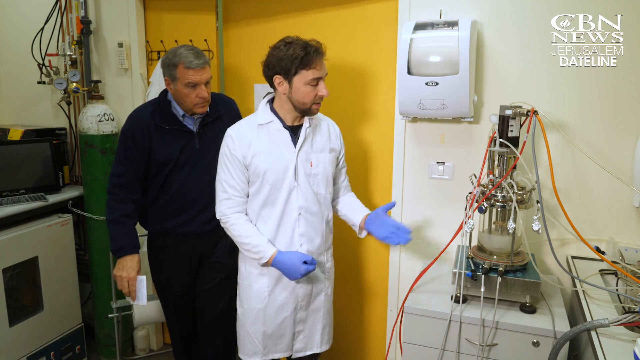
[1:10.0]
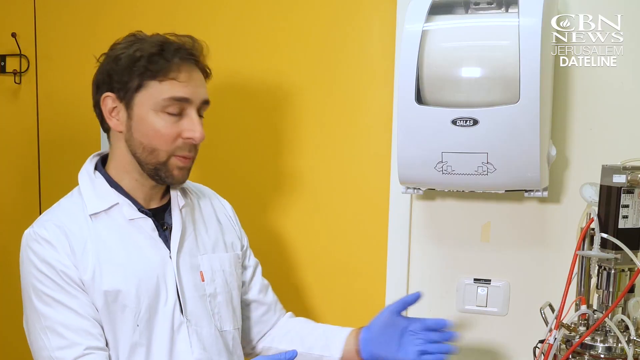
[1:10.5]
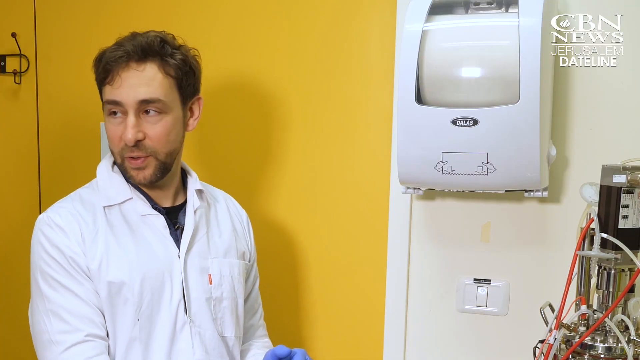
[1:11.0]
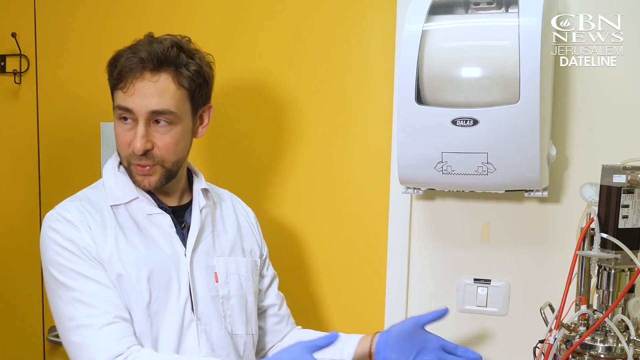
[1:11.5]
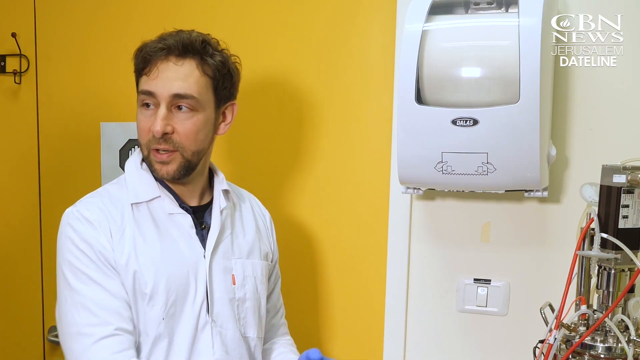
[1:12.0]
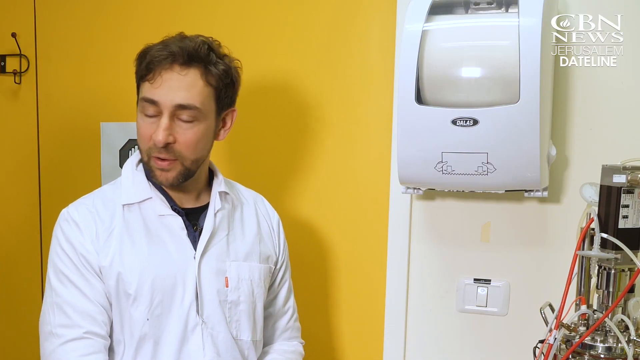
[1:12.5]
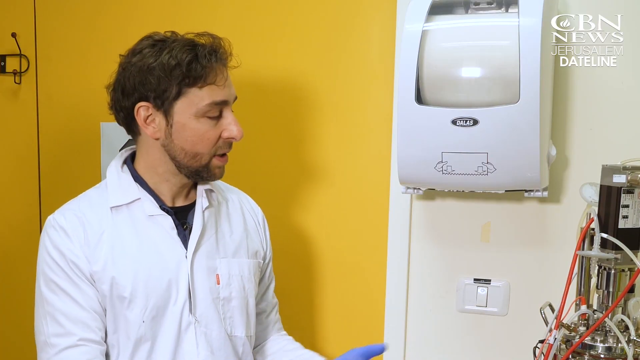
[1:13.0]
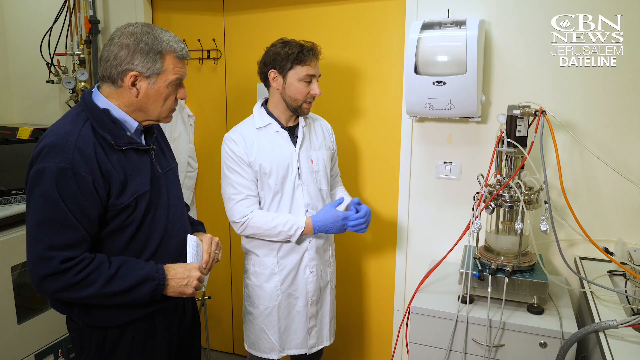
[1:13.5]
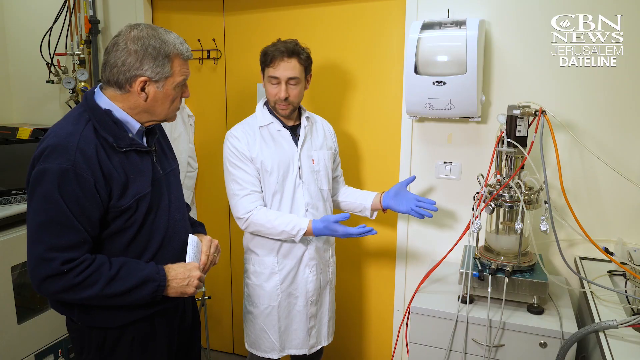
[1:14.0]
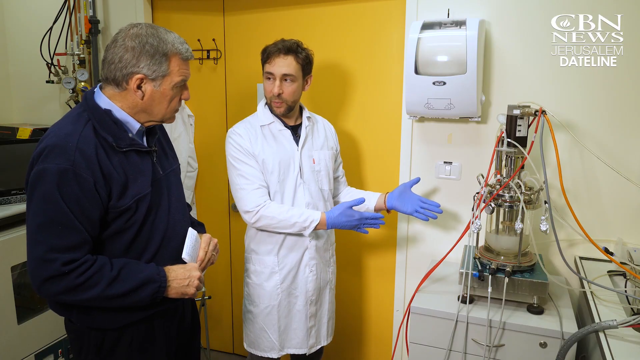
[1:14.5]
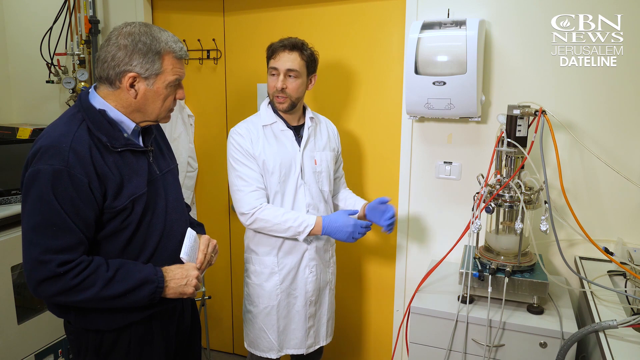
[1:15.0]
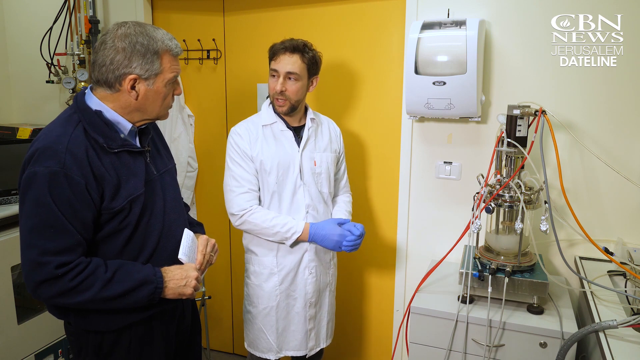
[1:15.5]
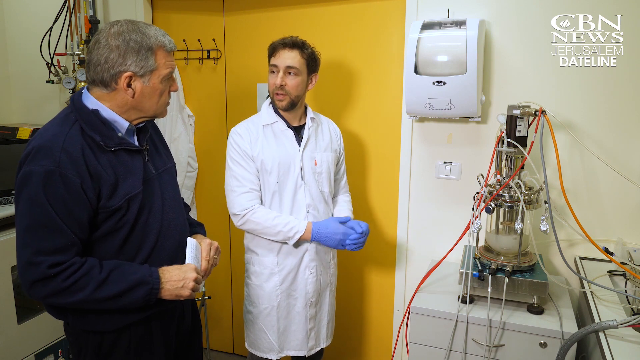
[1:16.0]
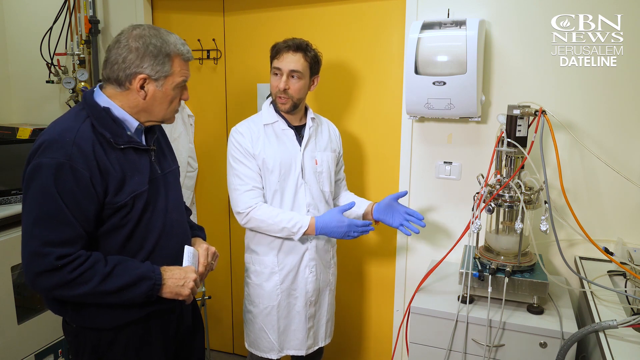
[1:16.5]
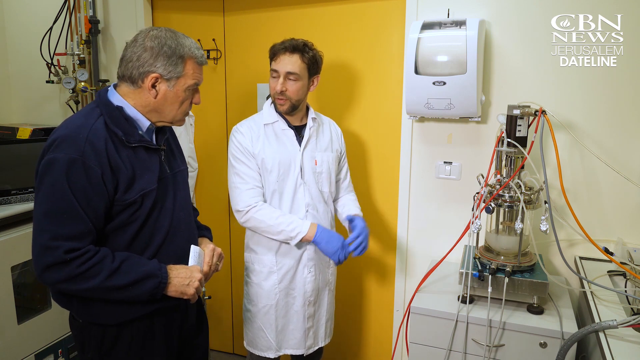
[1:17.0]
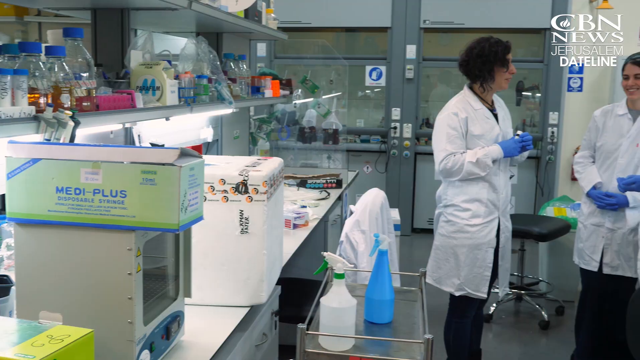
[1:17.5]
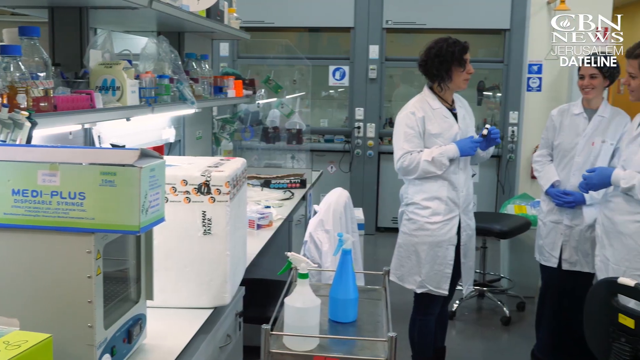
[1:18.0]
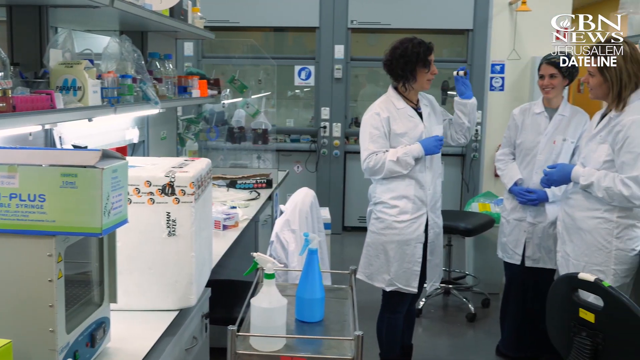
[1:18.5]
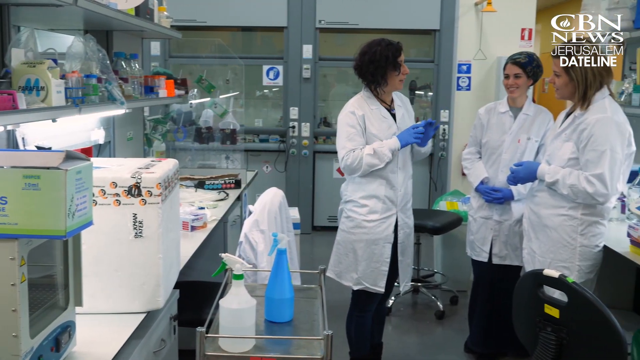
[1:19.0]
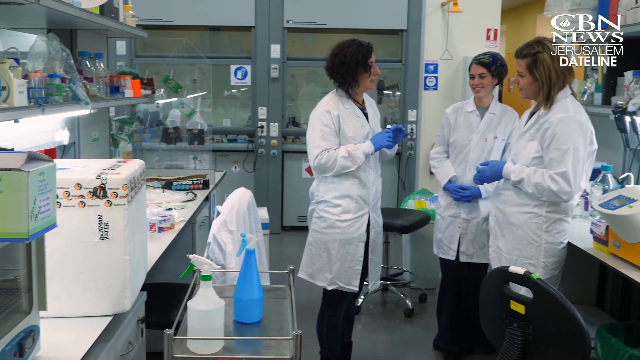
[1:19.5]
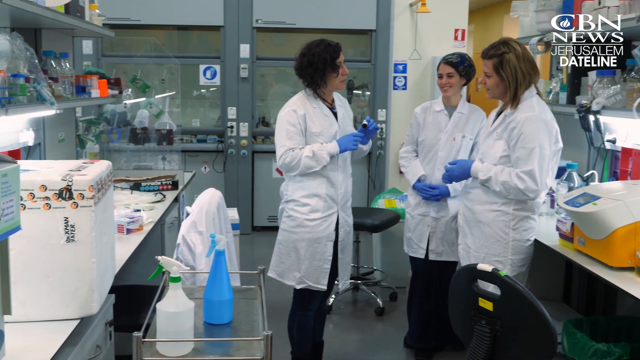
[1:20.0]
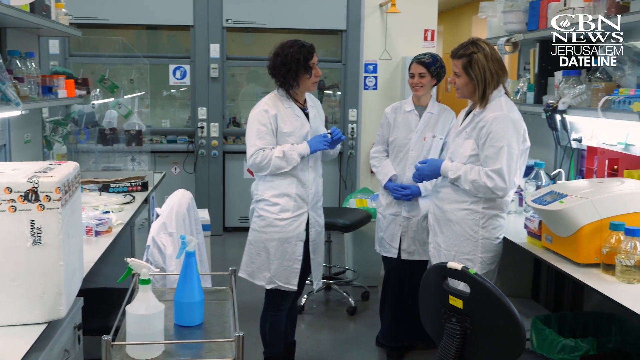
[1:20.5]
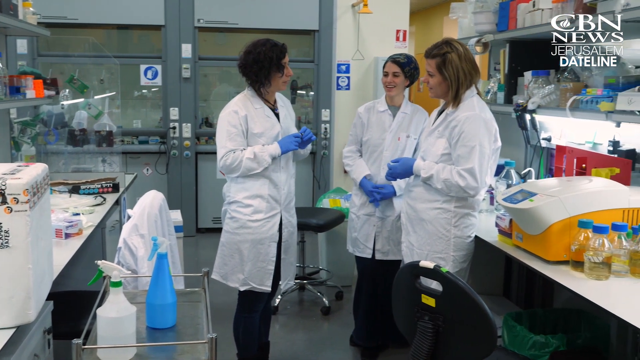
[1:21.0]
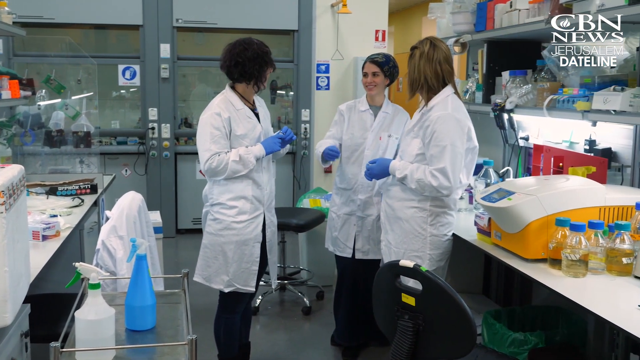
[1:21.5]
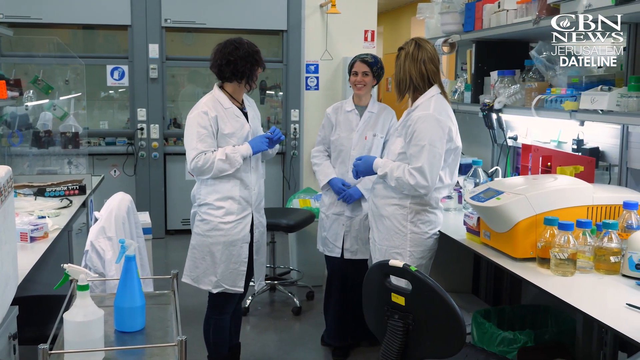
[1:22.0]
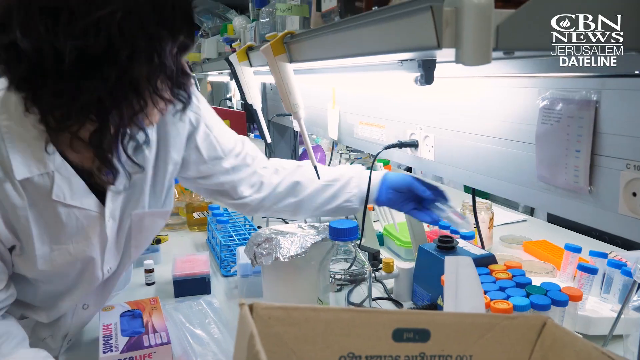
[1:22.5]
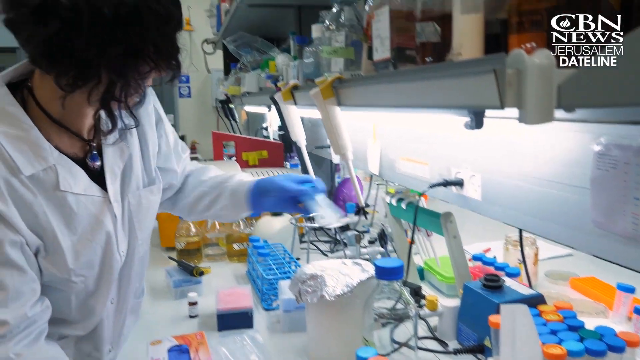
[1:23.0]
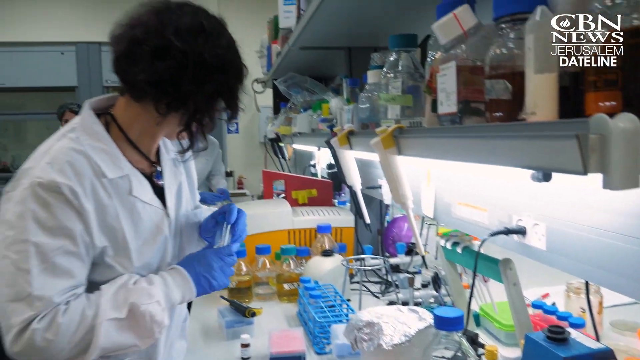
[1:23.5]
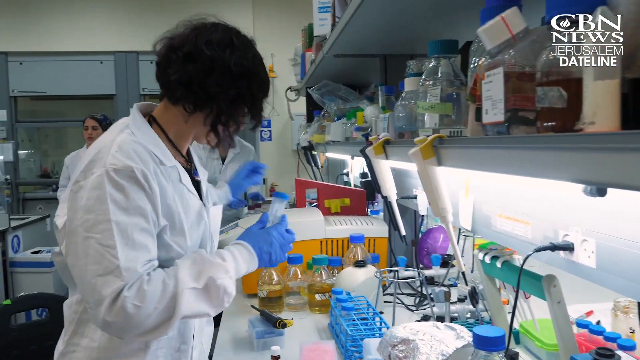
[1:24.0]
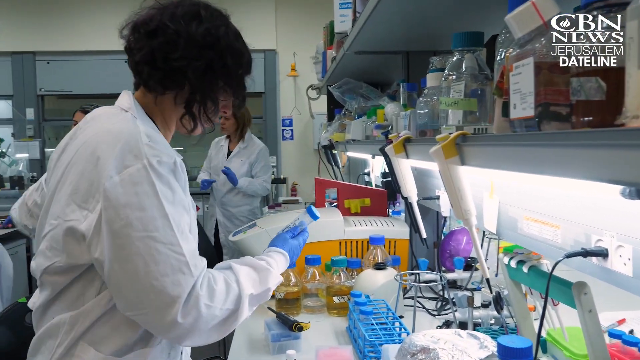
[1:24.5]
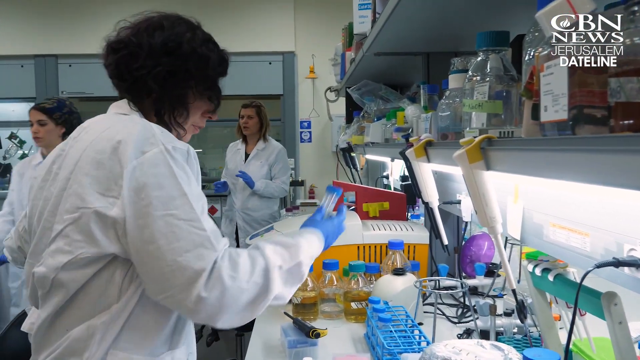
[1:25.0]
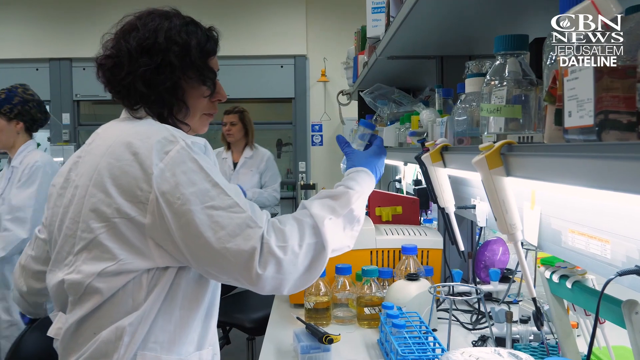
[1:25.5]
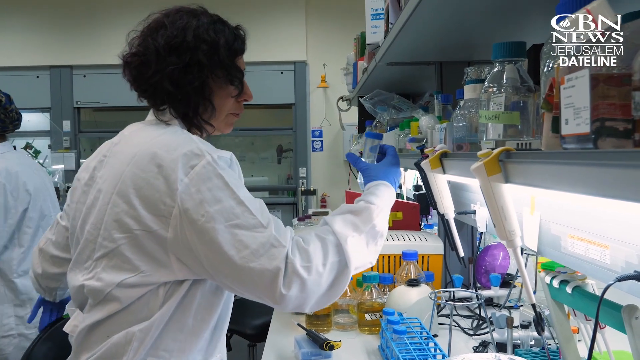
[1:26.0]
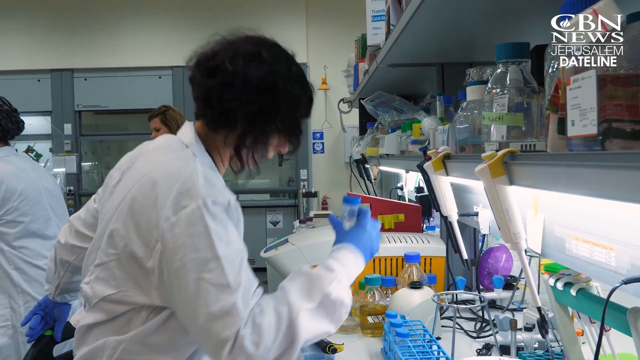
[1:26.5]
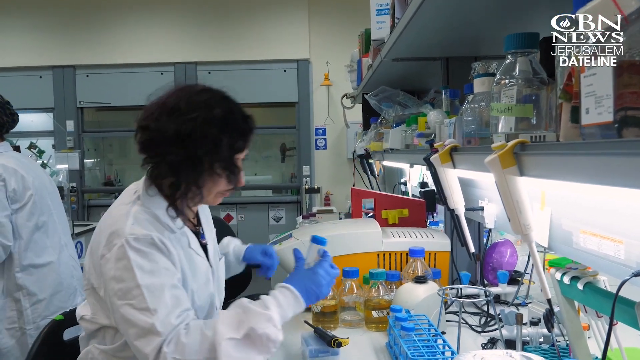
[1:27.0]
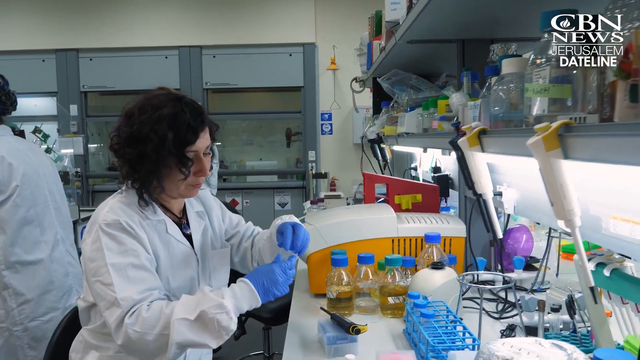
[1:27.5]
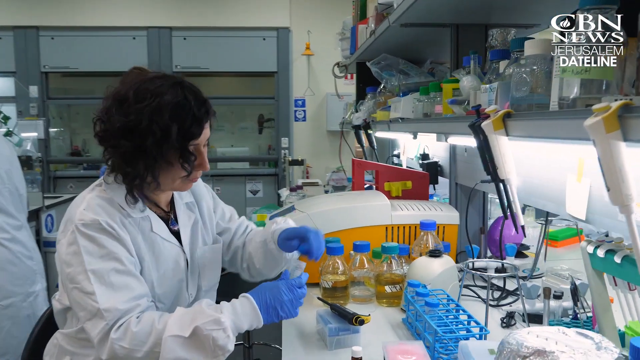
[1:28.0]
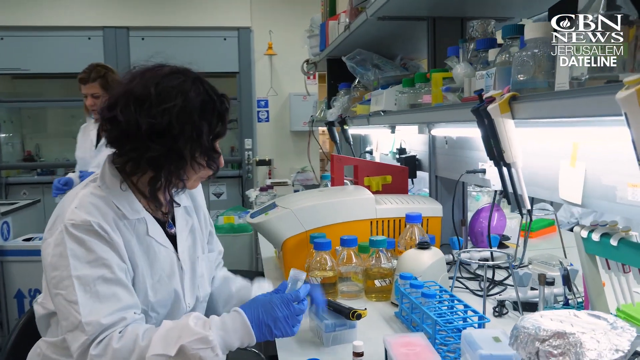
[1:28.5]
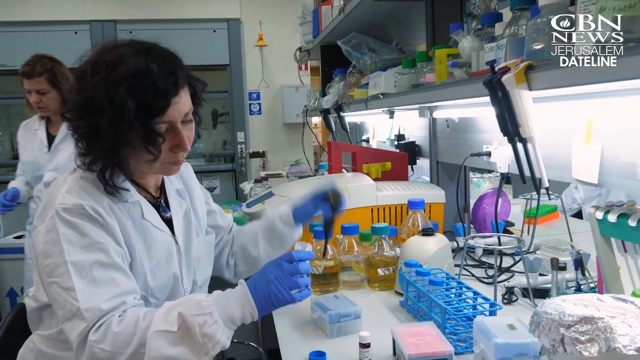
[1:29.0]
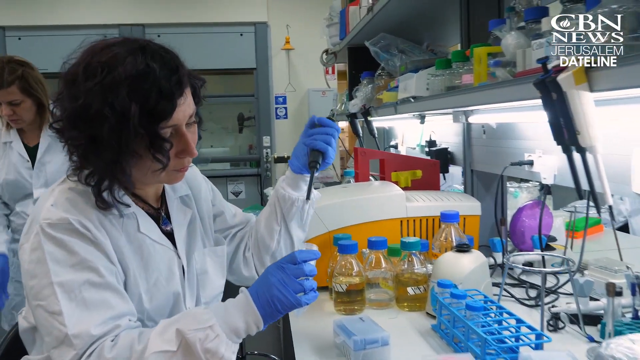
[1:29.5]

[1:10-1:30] The short, dark, wavy-haired man shows the host, Chris, around. They look at a dispenser that almost looks like a soap dispenser but is apparently a paper towel dispenser. To its right is a machine that looks almost like a beacon-type machine, about almost half the scientist's height, pointing upwards with multiple cylinders attached to it and a bunch of red and orange wires coming out of it and branching off.